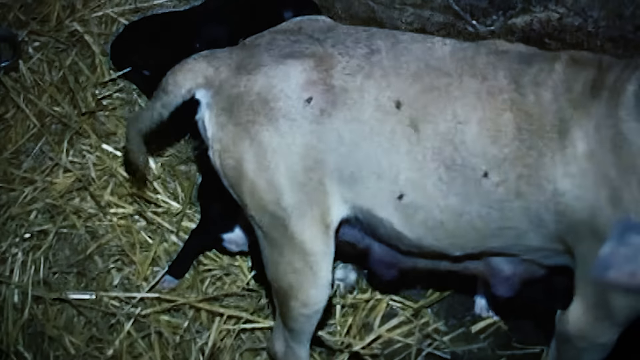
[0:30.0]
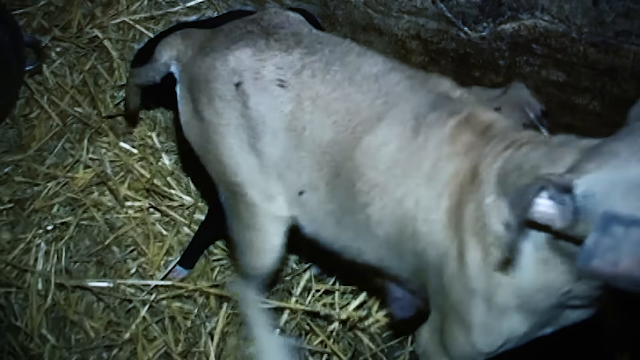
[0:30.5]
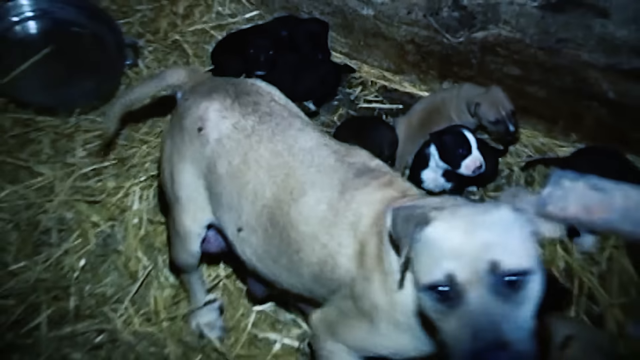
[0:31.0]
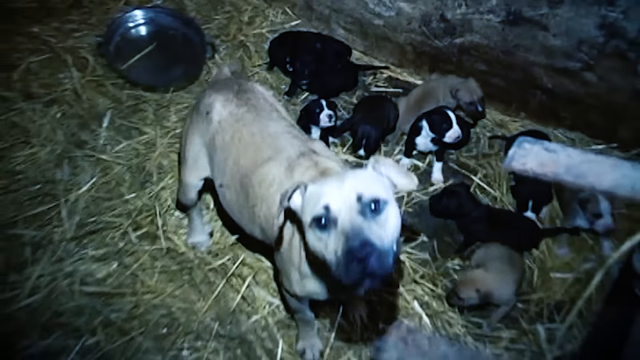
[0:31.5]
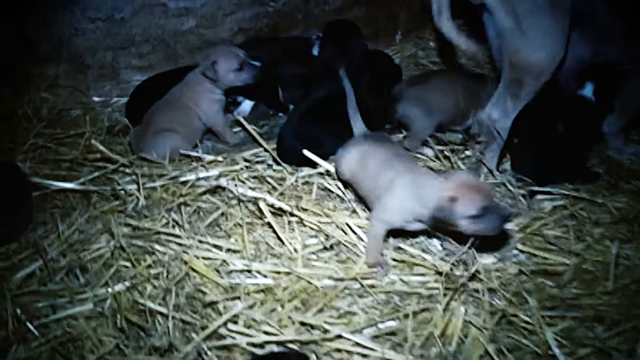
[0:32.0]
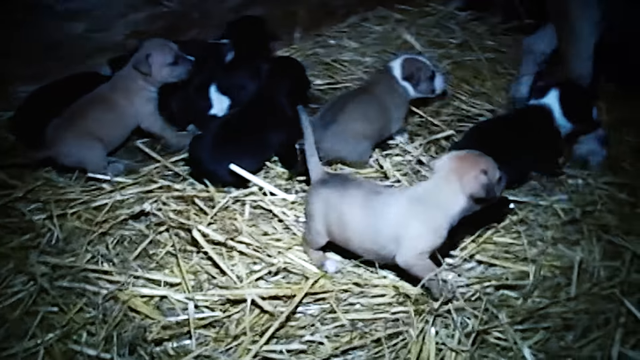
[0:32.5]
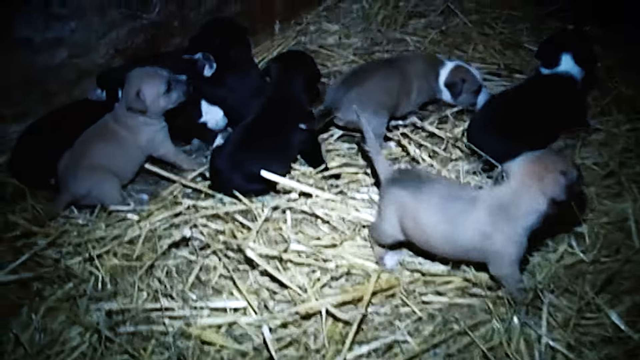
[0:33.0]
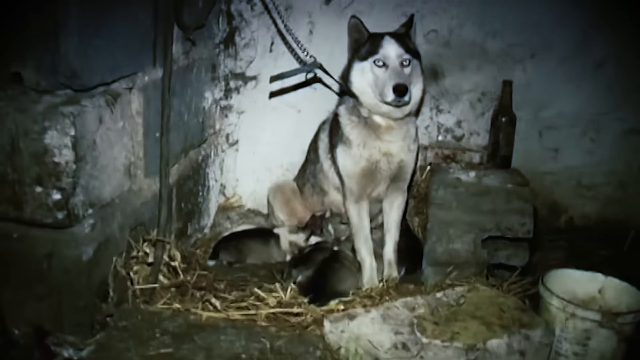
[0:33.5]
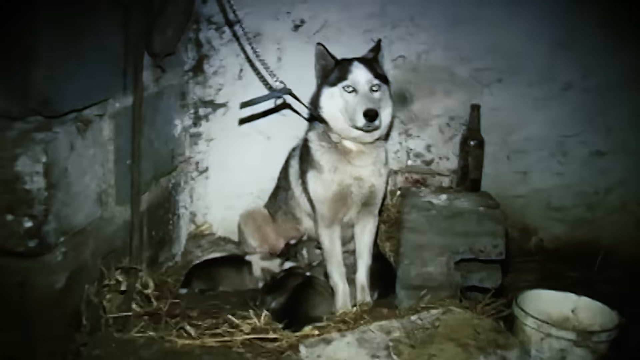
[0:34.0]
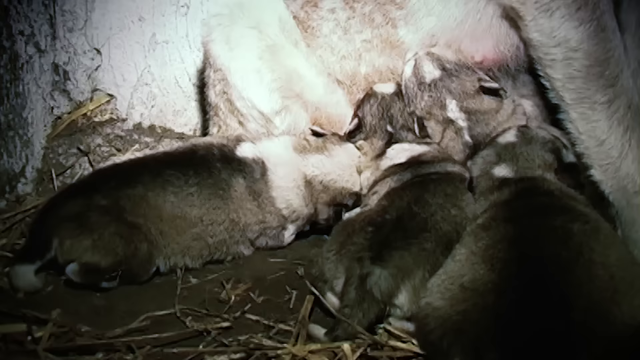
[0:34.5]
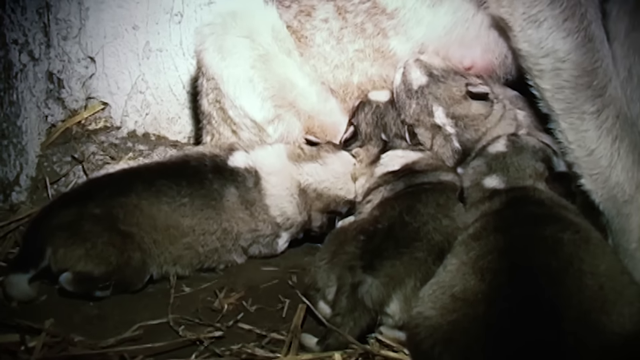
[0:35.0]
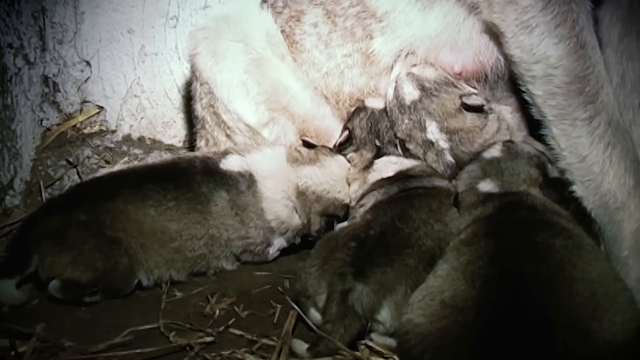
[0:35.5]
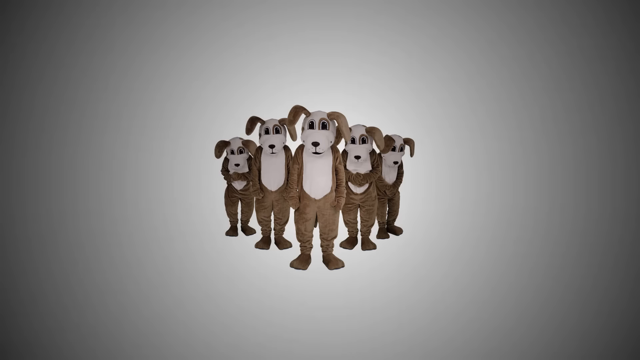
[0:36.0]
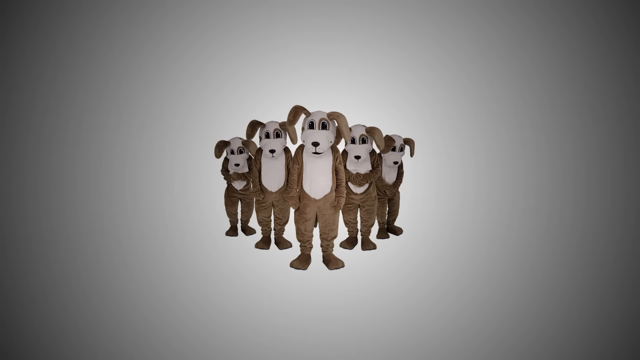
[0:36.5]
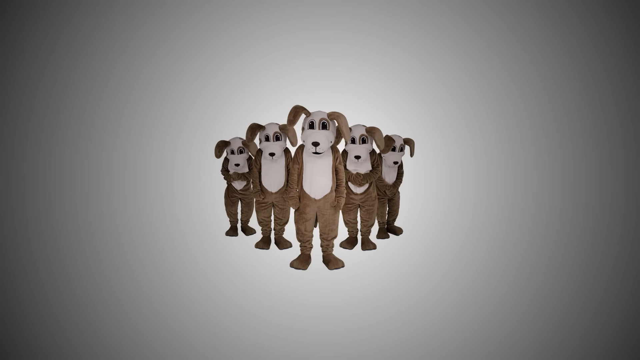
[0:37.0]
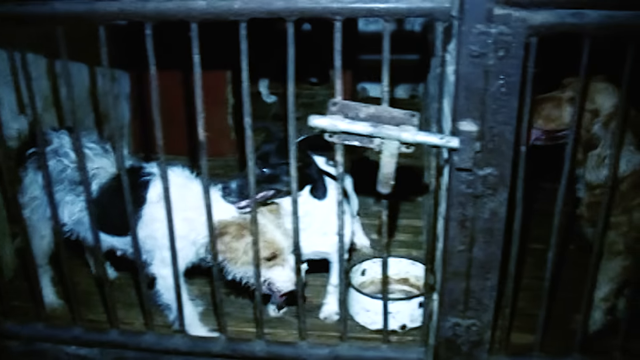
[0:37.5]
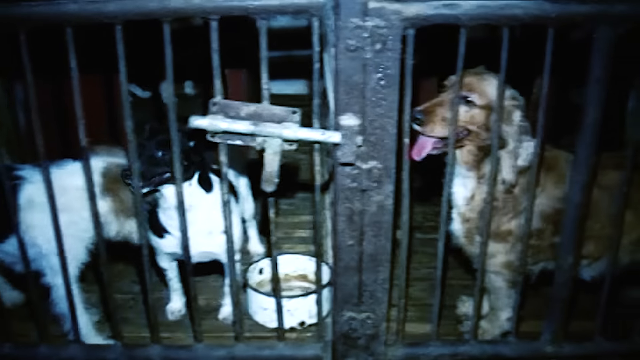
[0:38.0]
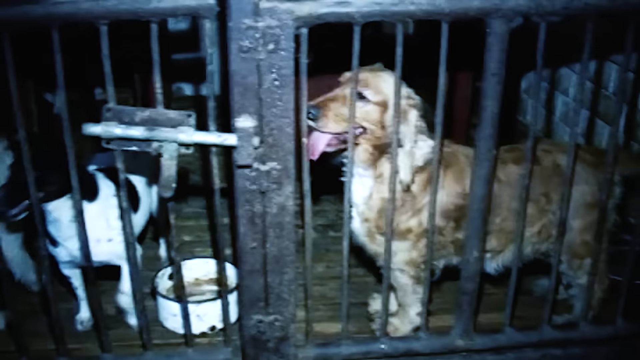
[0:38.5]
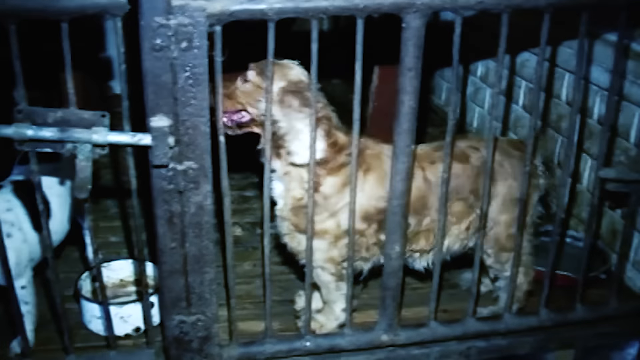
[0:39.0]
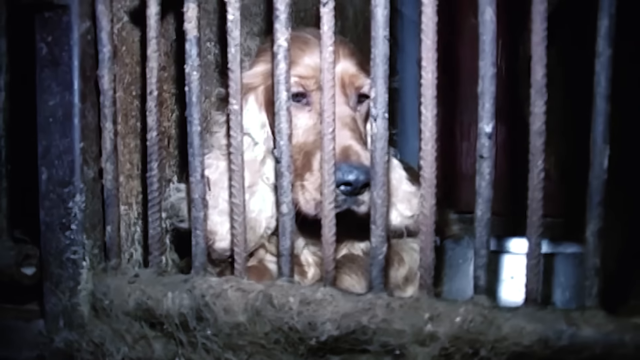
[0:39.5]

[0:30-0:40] A female dog lies with a lot of puppies, almost 12 of them. Some puppies are all brown, some black, some black and brown, and some black and white; they are all wiggling and seem happy next to their mom. The house where they stay is dirty, and there is a beer bottle on one of the bricks. A dog is chained up, sitting and looking up. A young dog is feeding, and more dogs appear; a few dogs seem to be caged up.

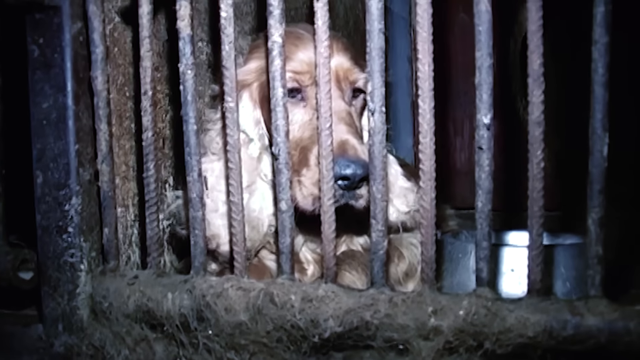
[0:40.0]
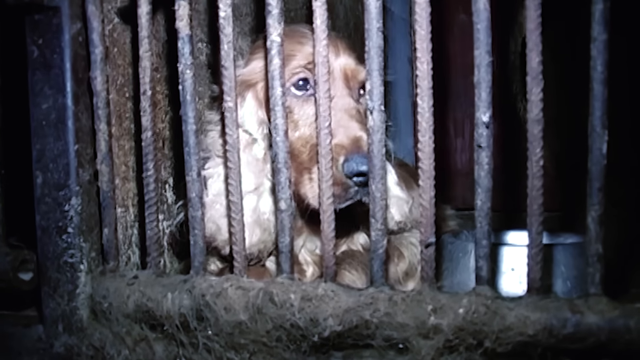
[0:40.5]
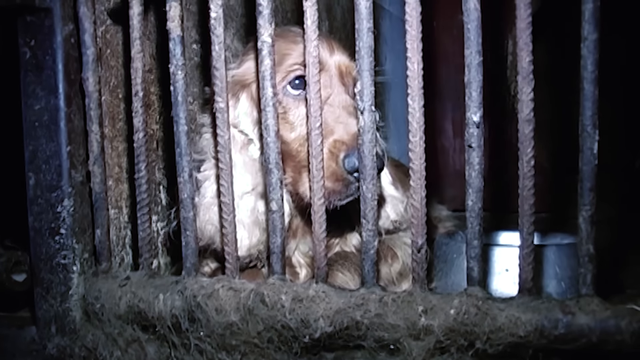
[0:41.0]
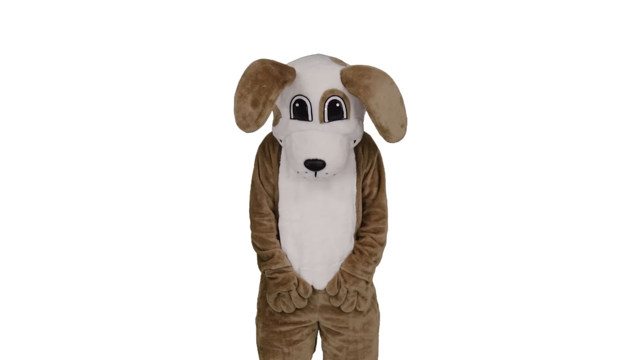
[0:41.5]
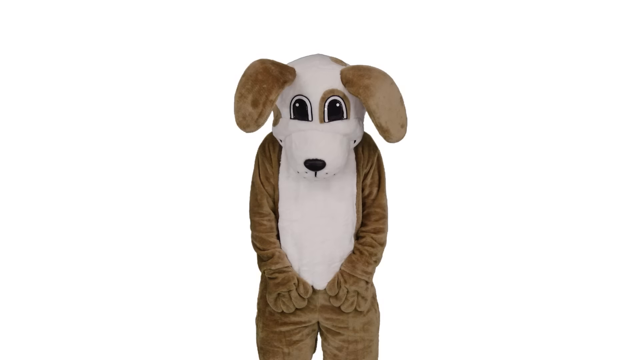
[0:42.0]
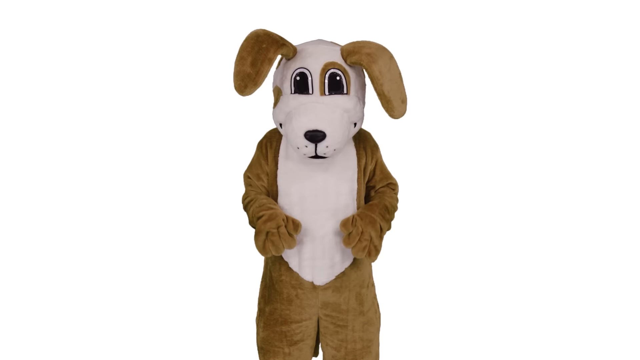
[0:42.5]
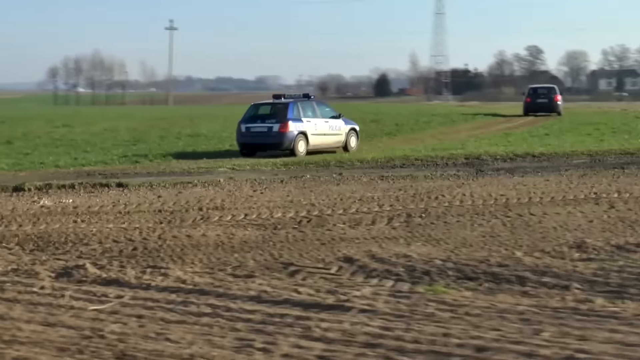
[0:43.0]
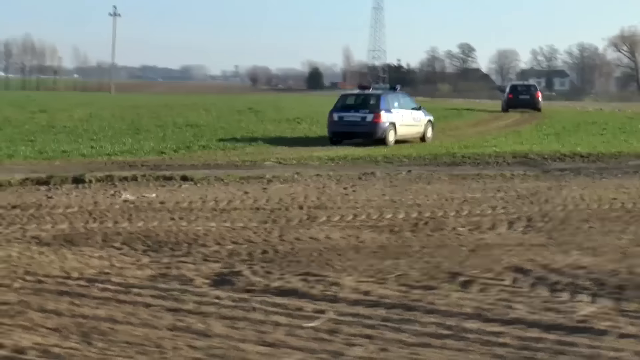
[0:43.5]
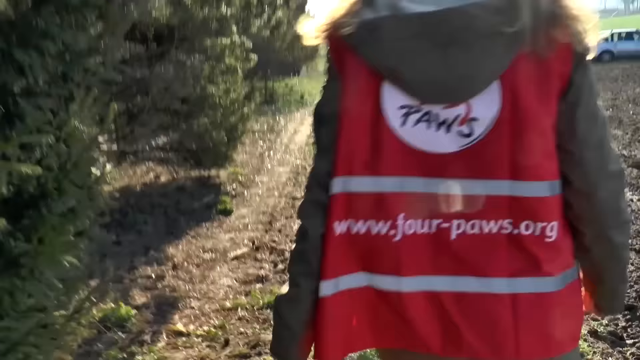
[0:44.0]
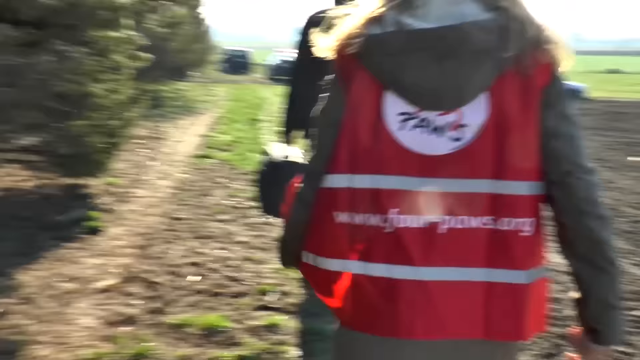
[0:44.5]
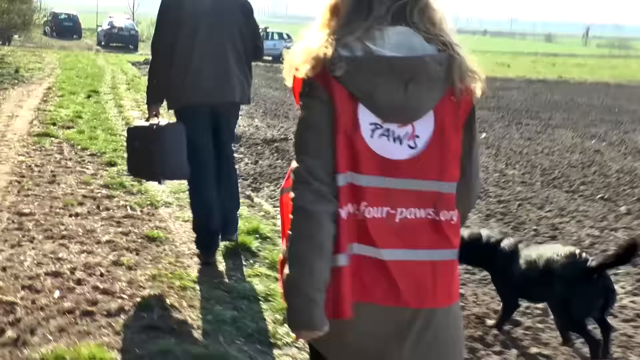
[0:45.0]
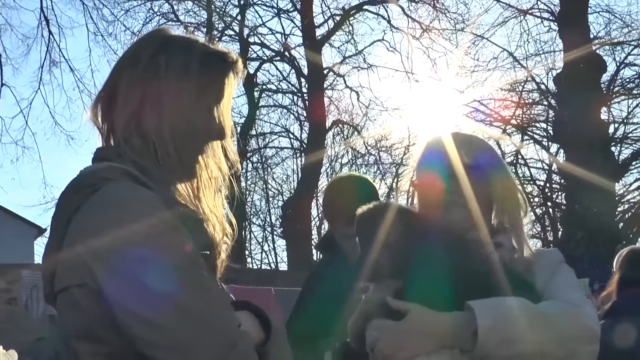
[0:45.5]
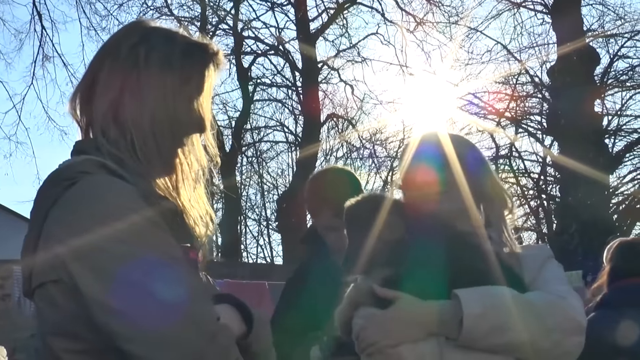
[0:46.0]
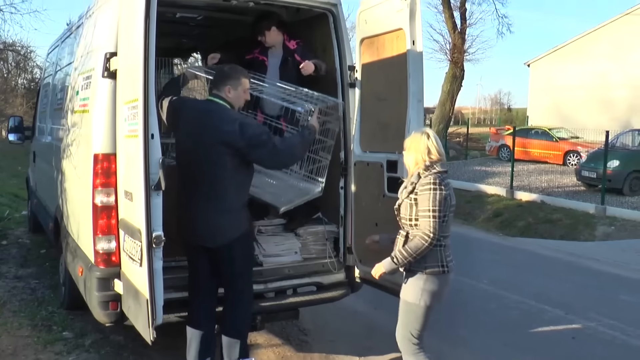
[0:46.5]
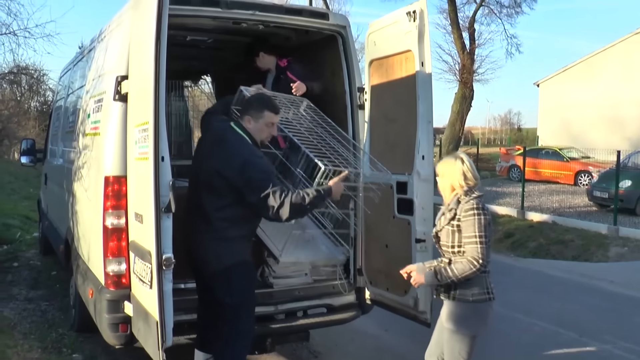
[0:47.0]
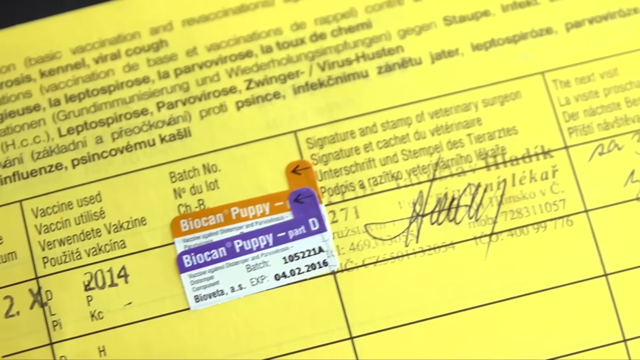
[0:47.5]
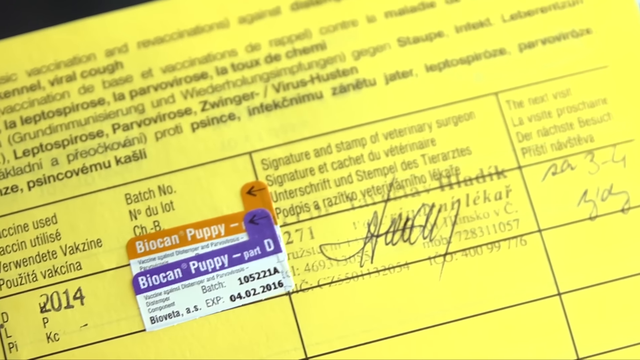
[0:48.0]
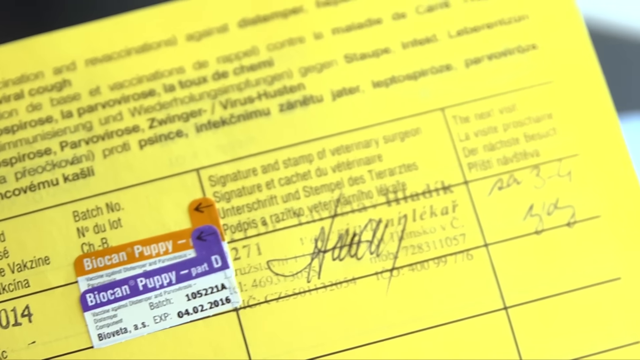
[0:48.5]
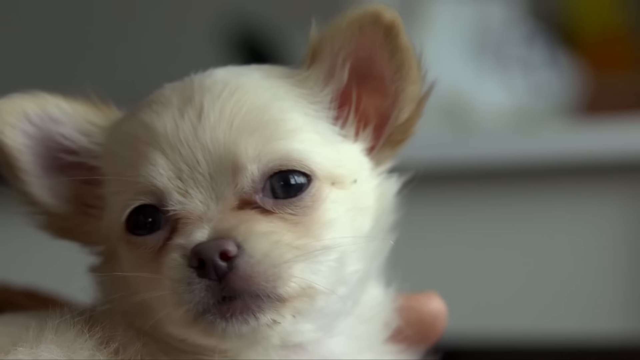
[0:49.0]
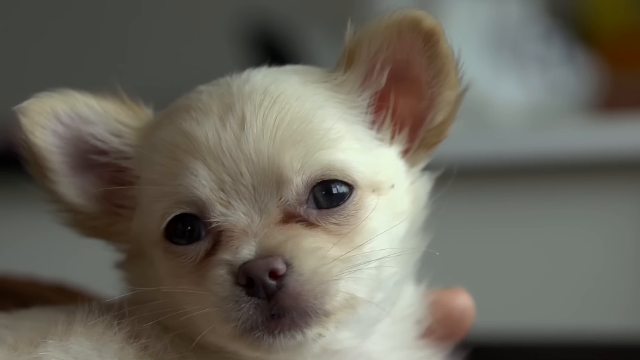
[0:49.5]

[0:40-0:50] A very blonde, beautiful-furred dog is caged up, looking sad, with a silver pot inside the cage. There is a glimpse of the person wearing the dog costume. The video moves to an empty field, sandy on one side and lawn on the other, where two cars are driving. A lady walks wearing a brown jacket and a red safety jacket with "4Paws.org" written on it, with a black dog walking next to her. People are outside talking, and some people remove cages from a truck.